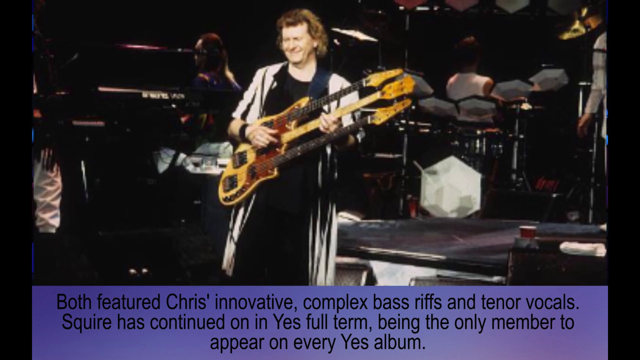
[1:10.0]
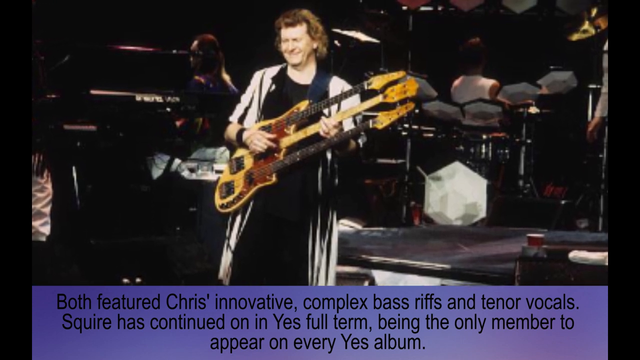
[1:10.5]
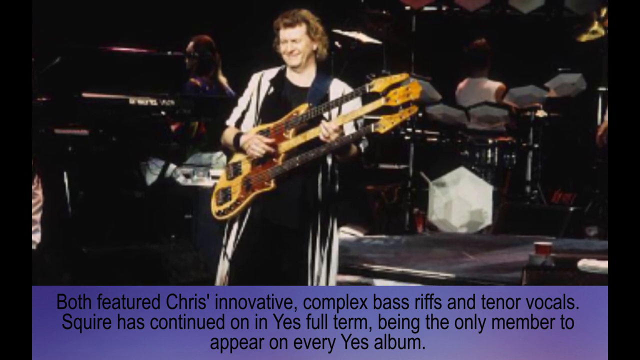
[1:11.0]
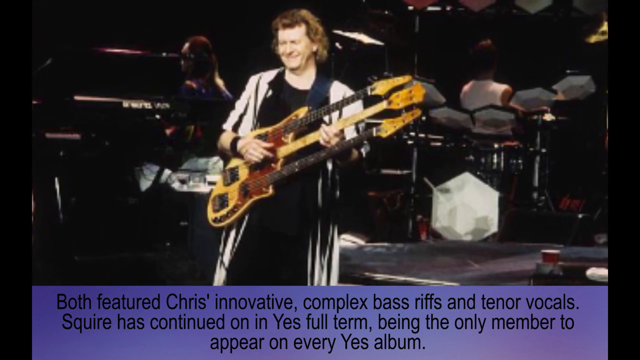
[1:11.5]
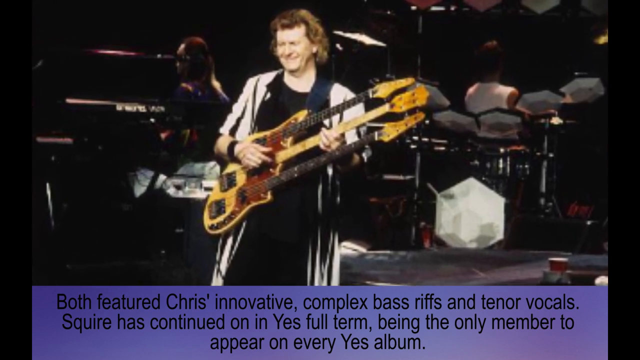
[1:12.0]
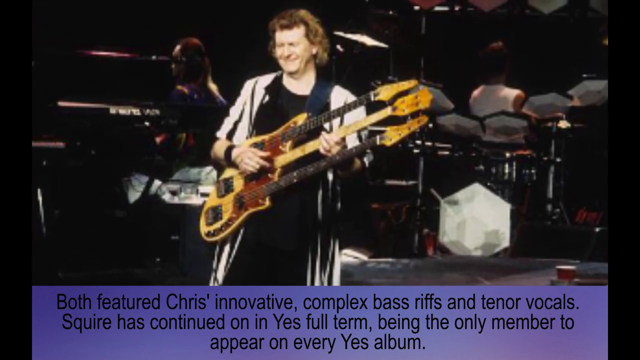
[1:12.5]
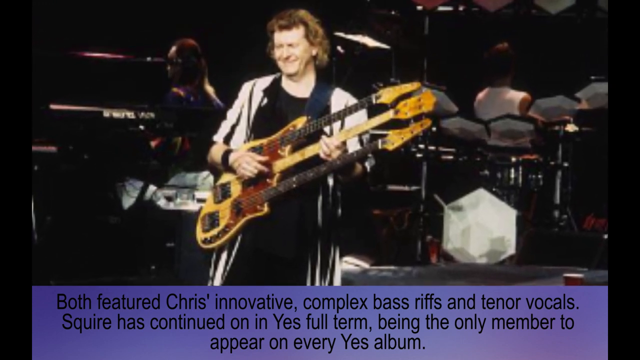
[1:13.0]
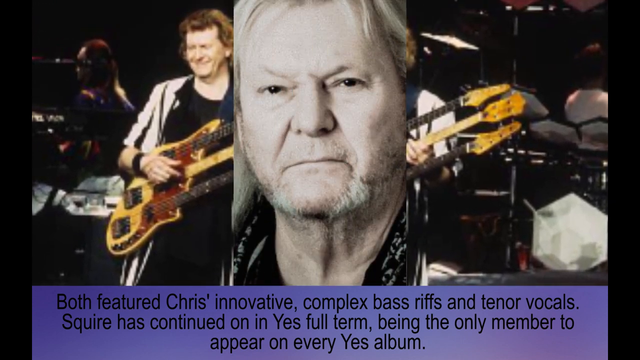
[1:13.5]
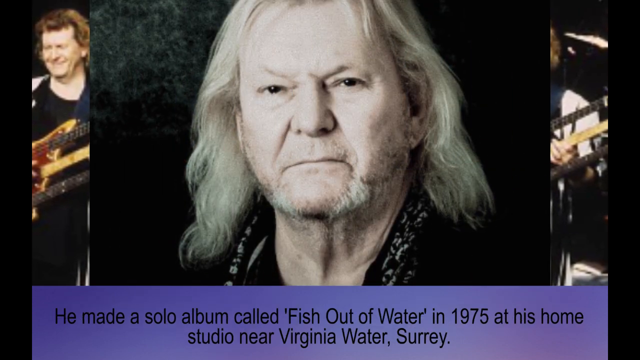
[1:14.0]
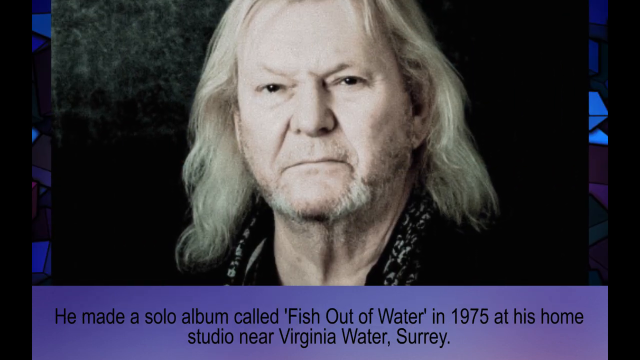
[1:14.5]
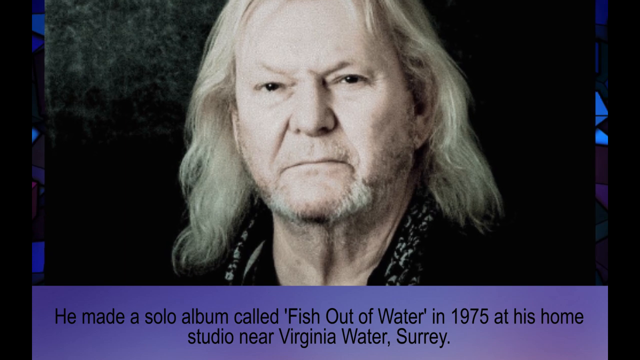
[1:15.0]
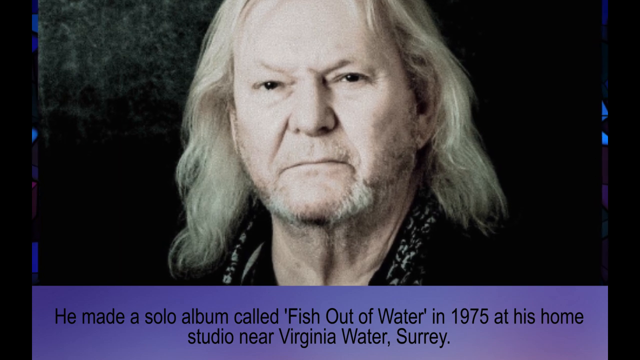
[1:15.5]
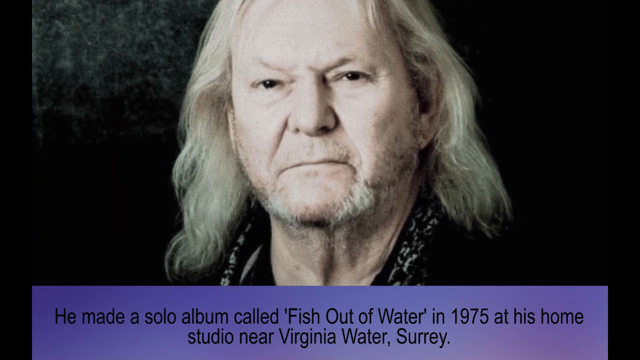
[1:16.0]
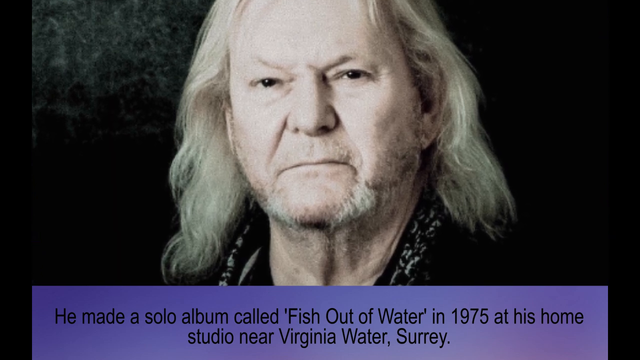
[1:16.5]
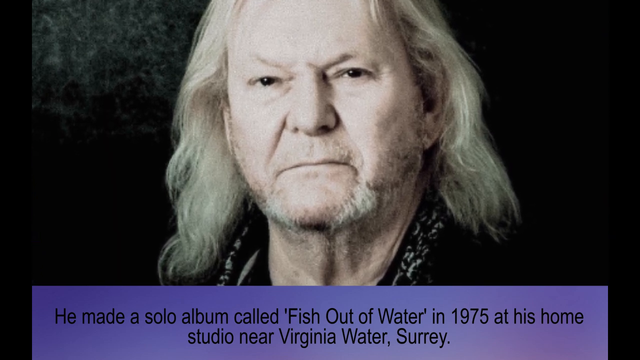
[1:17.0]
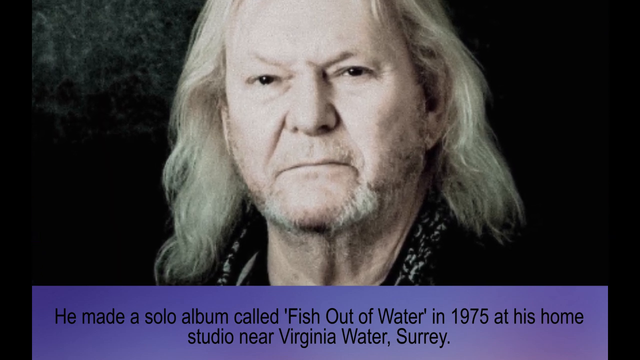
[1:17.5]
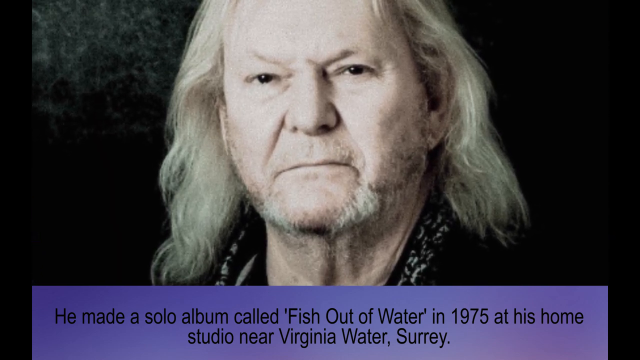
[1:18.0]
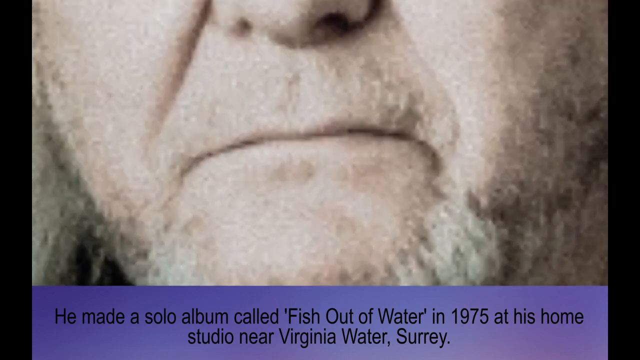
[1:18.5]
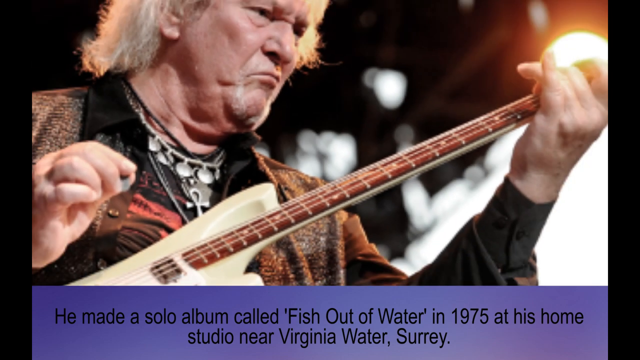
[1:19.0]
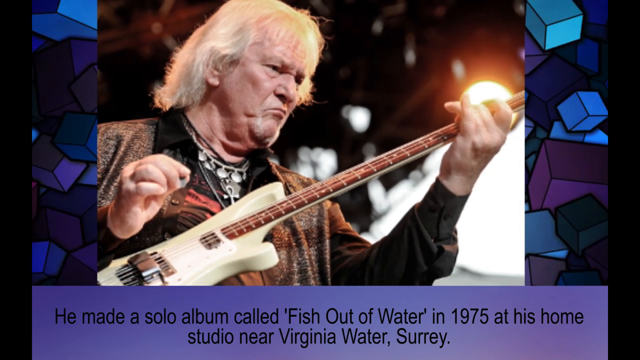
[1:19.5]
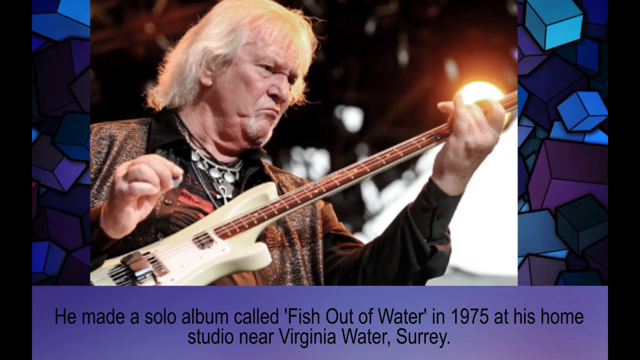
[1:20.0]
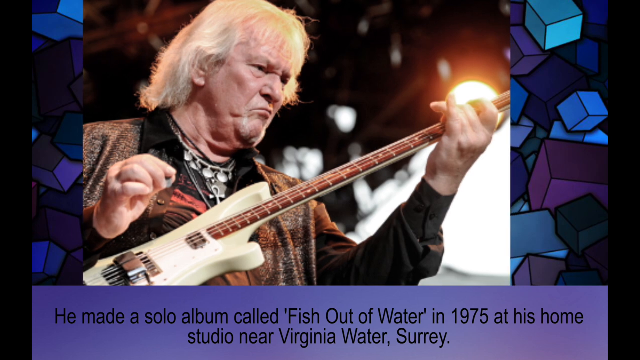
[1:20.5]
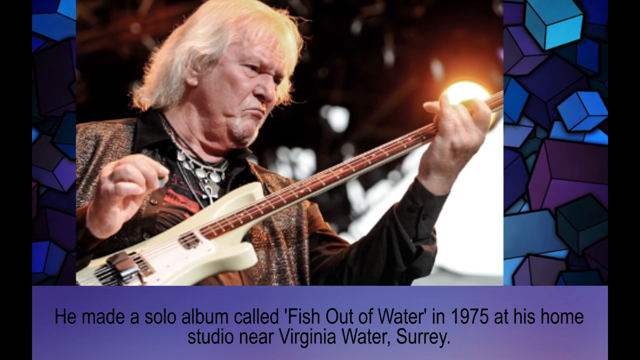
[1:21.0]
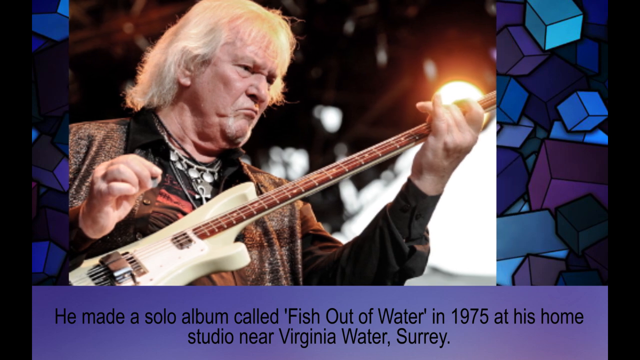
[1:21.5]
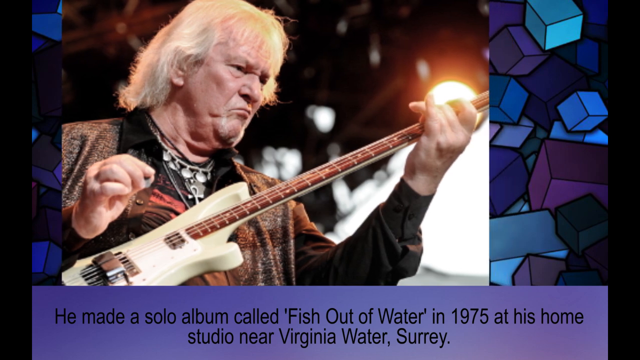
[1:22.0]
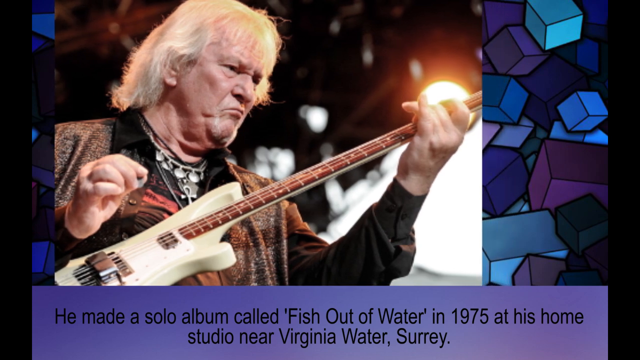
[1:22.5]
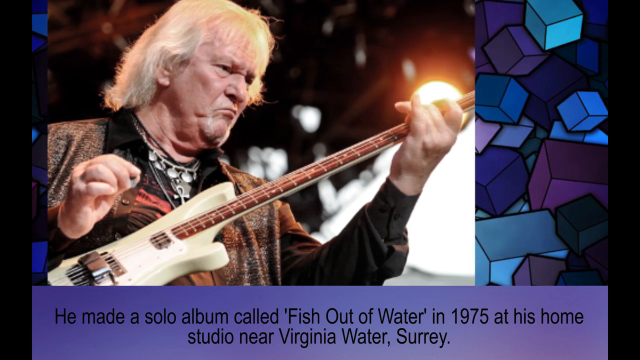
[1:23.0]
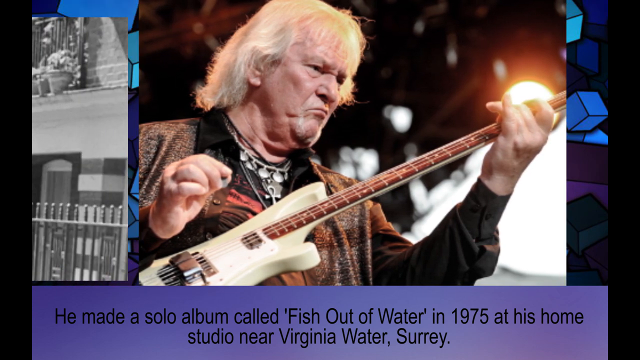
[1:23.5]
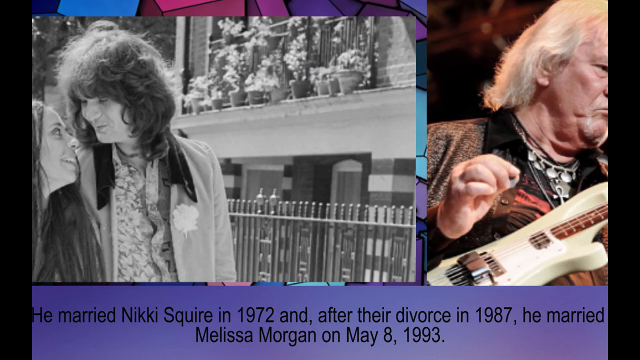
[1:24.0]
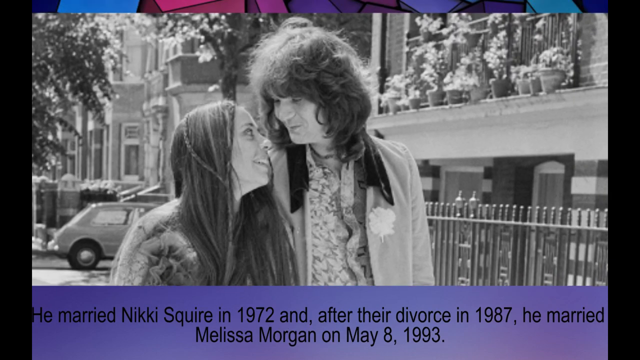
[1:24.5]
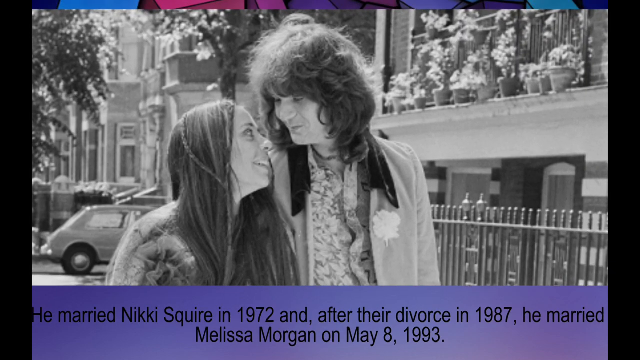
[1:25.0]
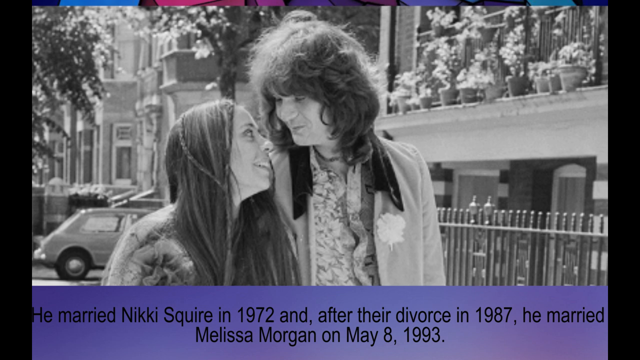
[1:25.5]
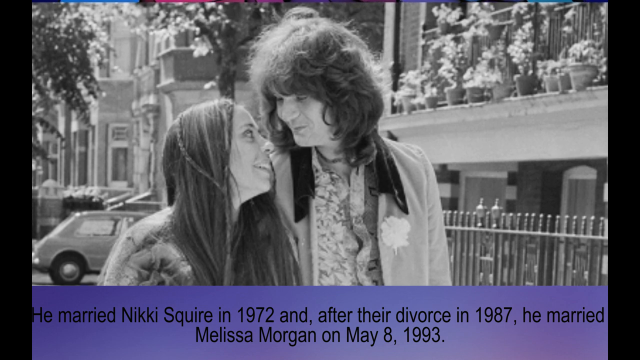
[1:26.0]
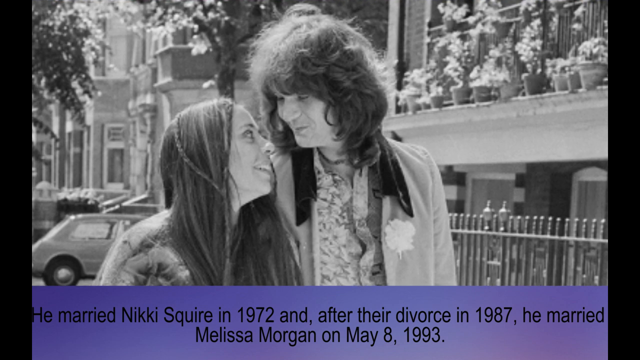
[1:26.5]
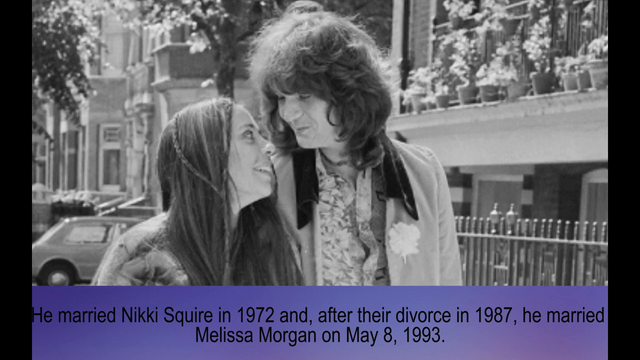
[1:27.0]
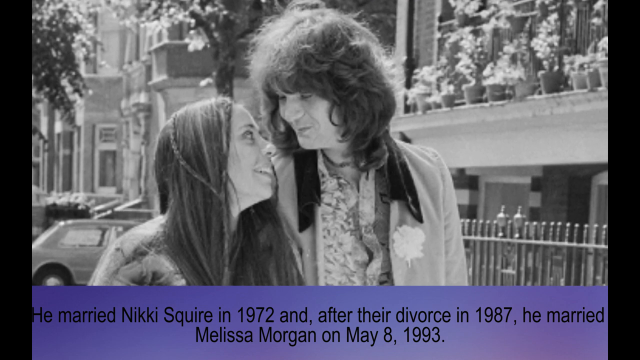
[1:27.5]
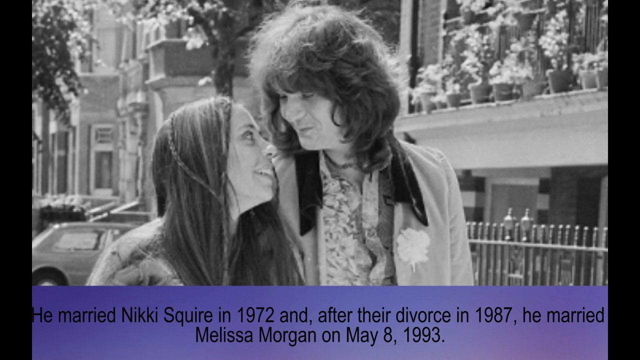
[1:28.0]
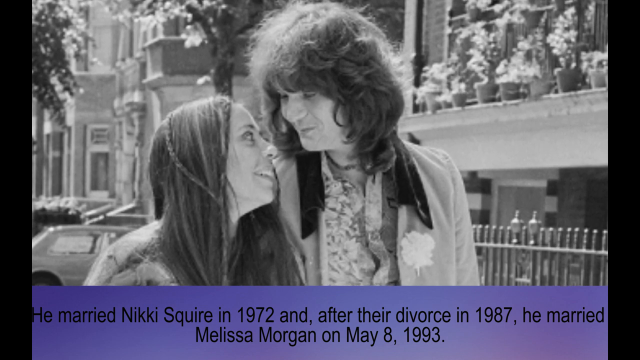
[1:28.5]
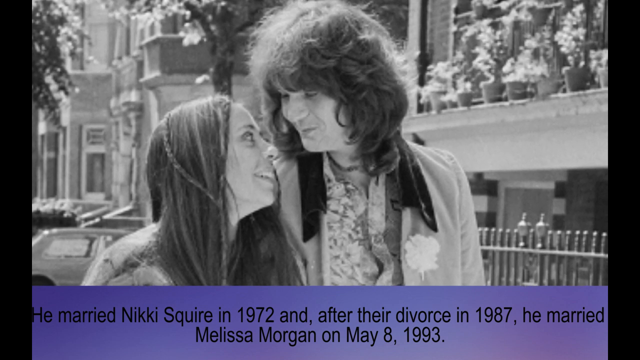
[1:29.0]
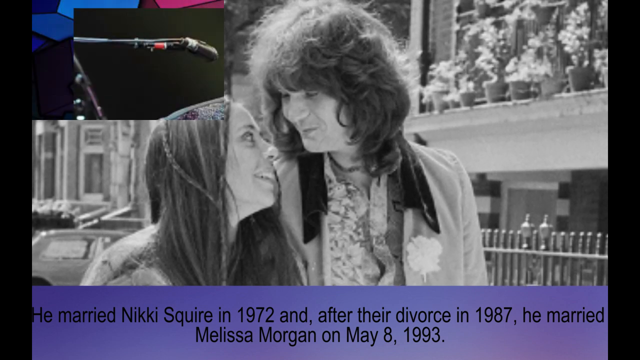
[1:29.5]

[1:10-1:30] Chris Squire is on stage playing his three-necked guitar, wearing a black-and-white striped robe-like garment with black clothes underneath. Text at the bottom of the screen reads: "Both featured Chris's innovative, complex bass riffs and tenor vocals. Squire has continued on in YES! full term, being the only member to appear on every YES! album." The next picture is a close-up of his face, with text reading: "He made a solo album called Fish Out of Water in 1975 at his home studio near Virginia Water, Surrey." The next image shows him playing on stage, holding his guitar with his right hand in the air, with a stage in the background behind him. The following picture shows him when he was younger, walking down the street with someone who appears to be his girlfriend.